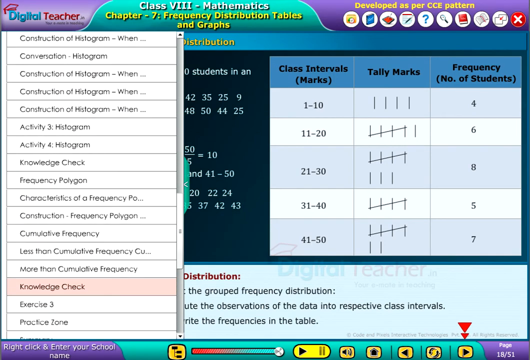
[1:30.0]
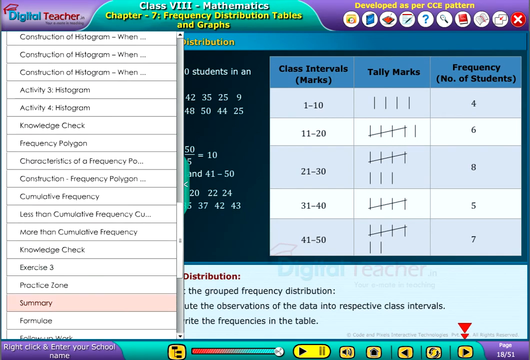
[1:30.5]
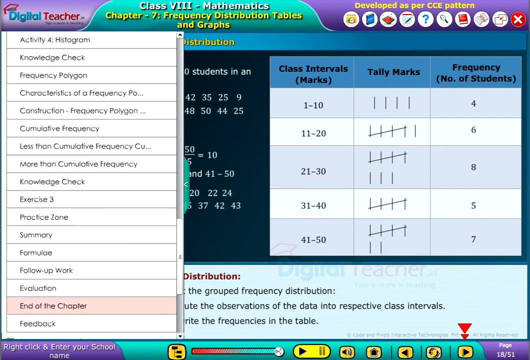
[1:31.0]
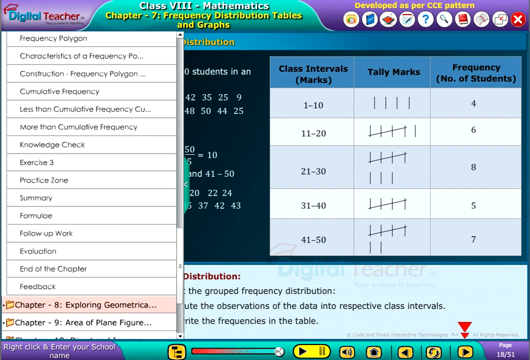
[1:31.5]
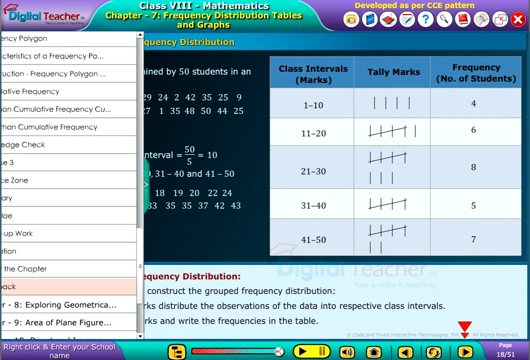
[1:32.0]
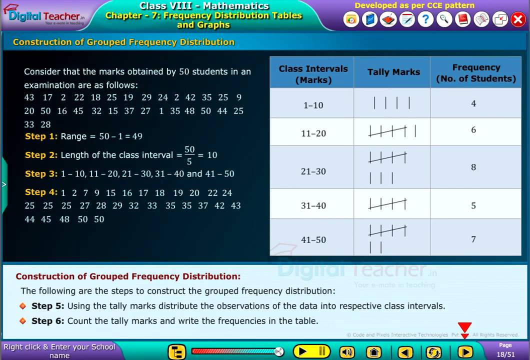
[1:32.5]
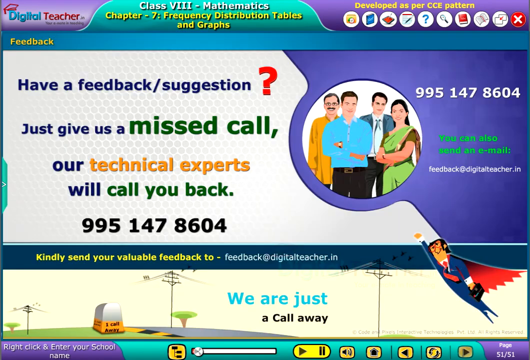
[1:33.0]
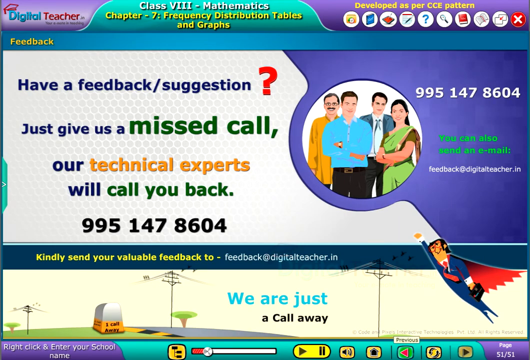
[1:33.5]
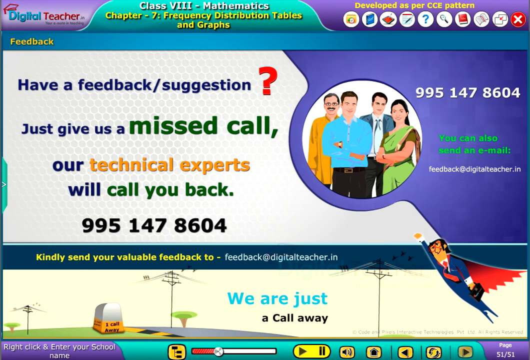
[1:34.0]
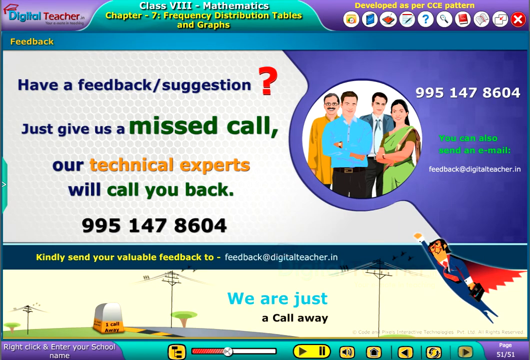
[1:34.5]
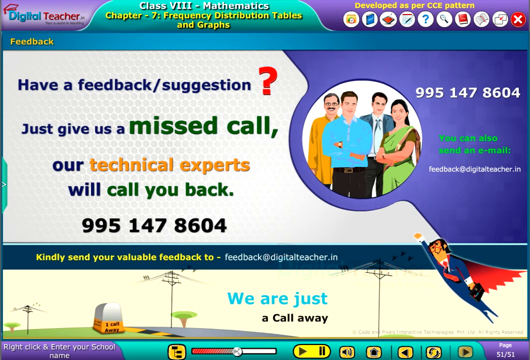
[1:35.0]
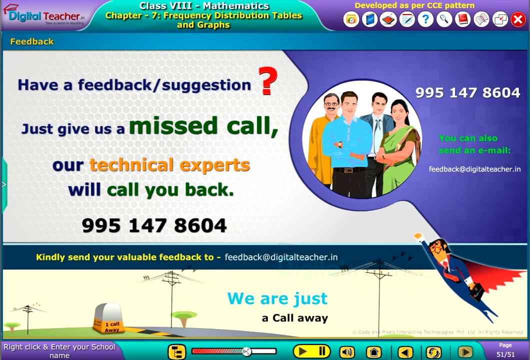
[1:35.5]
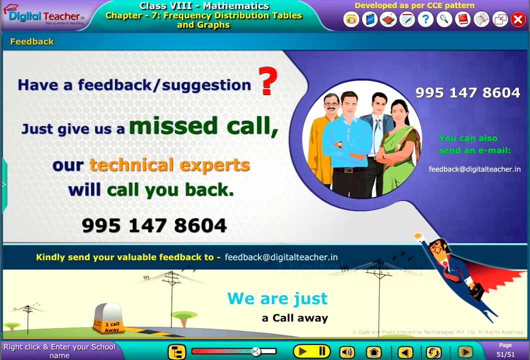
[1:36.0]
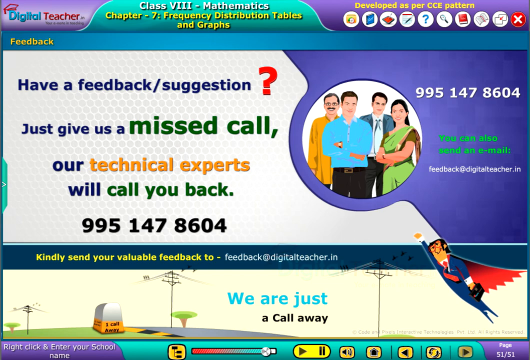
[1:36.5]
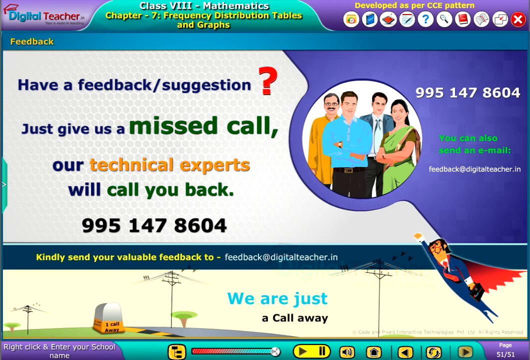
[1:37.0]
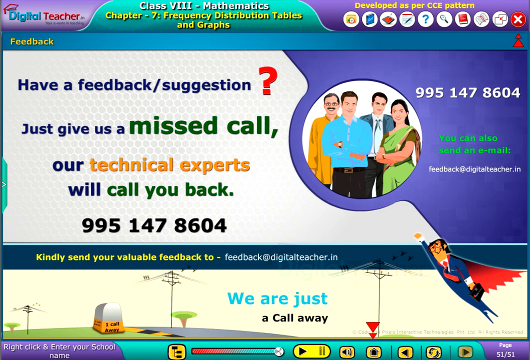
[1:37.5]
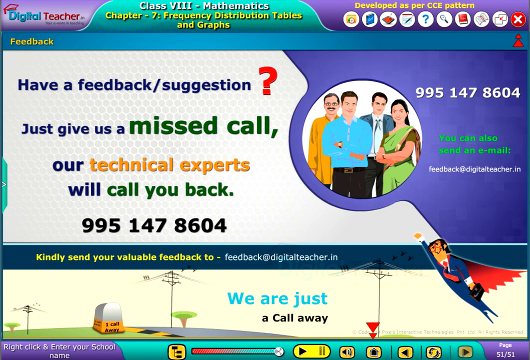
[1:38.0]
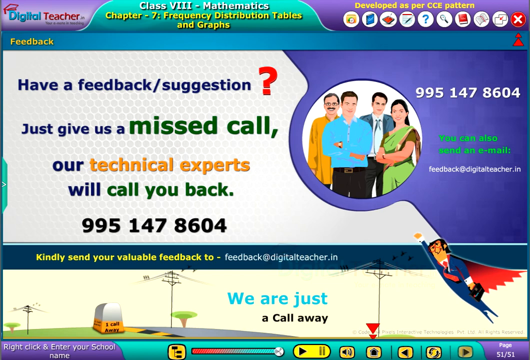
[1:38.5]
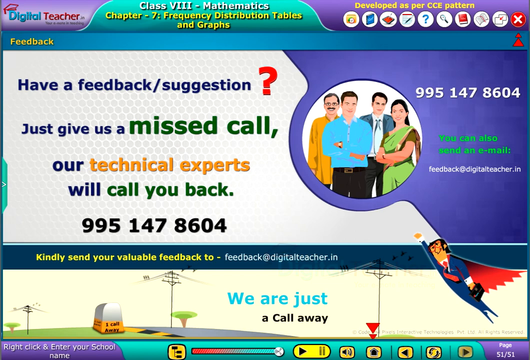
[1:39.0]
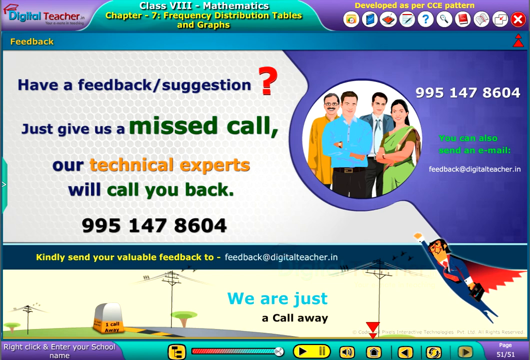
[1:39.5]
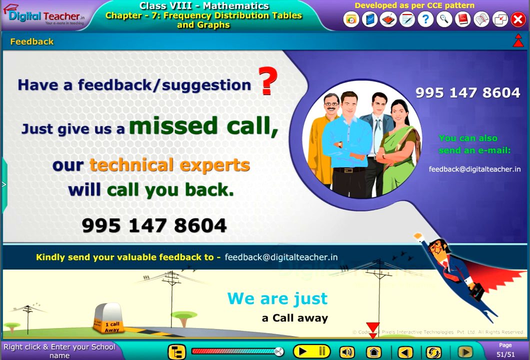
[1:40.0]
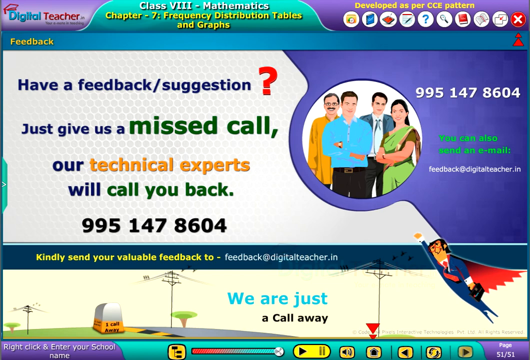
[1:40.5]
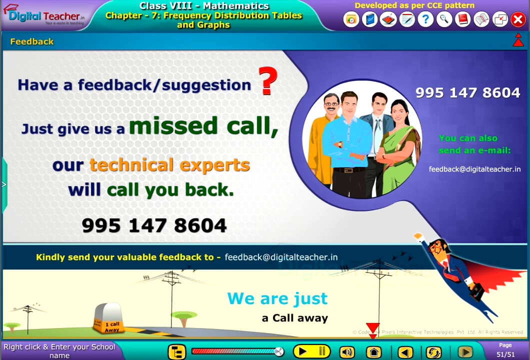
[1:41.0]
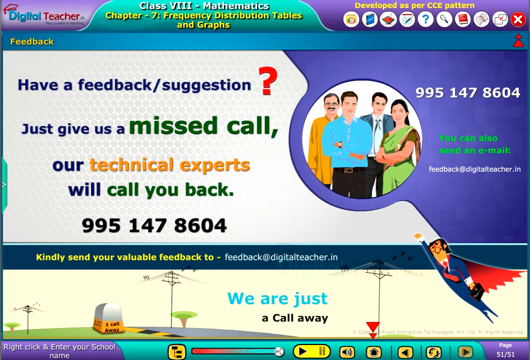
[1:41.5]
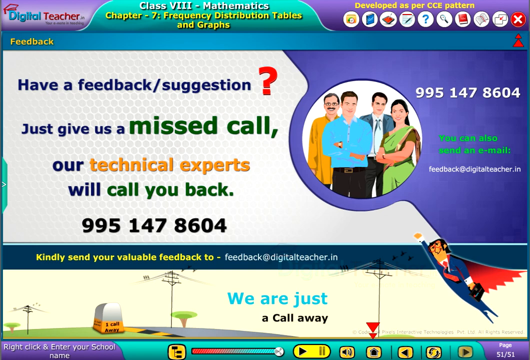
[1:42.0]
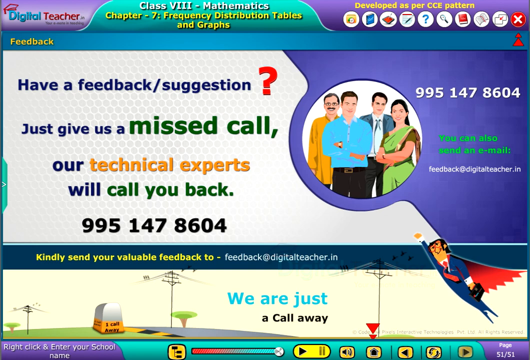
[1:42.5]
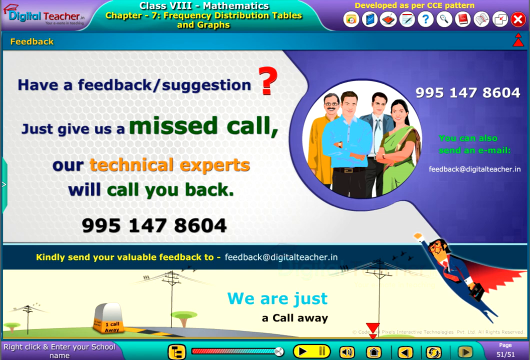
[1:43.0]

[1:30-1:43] A slide for a math class shows a table on its right side. The first column reads "class intervals", with the intervals listed beneath: 1-10, 11-20, 21-30, 31-40 and the final interval 41-50. The second column is "tally marks", with tally marks made for each count in the intervals, and the third and final column is "frequency", where the tally marks are totaled and written as ordinary numerals. On the left side of the screen, a pop-out shows the contents of the chapter as a list in black text against a white background. It quickly scrolls down, each item highlighted in a pinkish hue as it is scrolled over. The video then moves to a new slide of the have-any-feedback-or-suggestions type, showing a number that can be called with comments or questions.